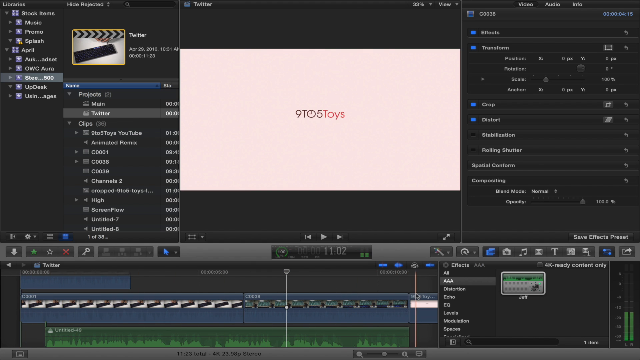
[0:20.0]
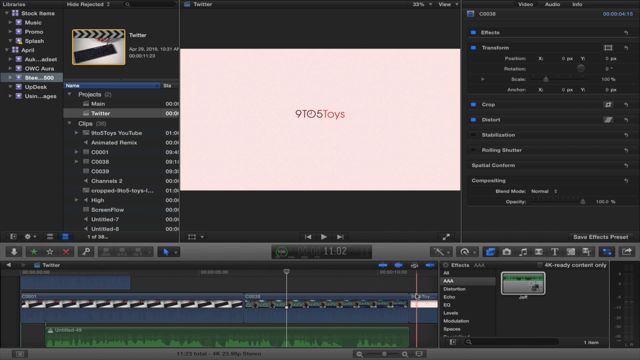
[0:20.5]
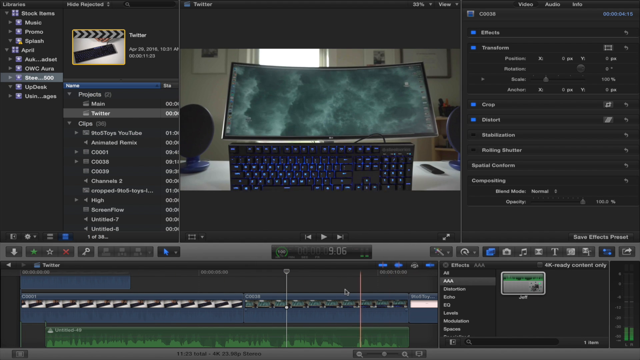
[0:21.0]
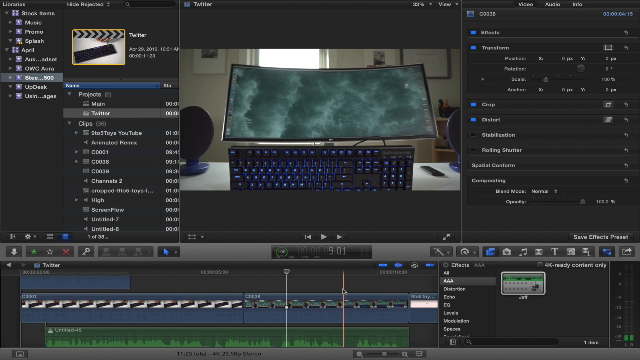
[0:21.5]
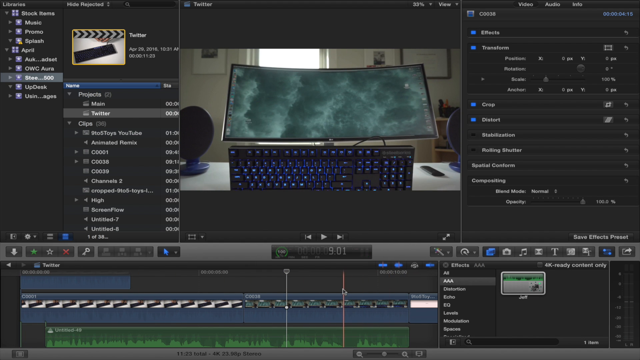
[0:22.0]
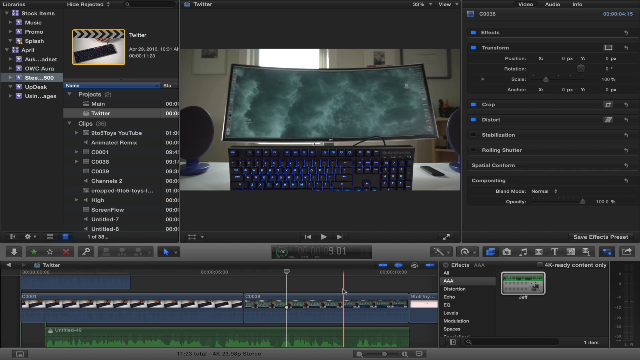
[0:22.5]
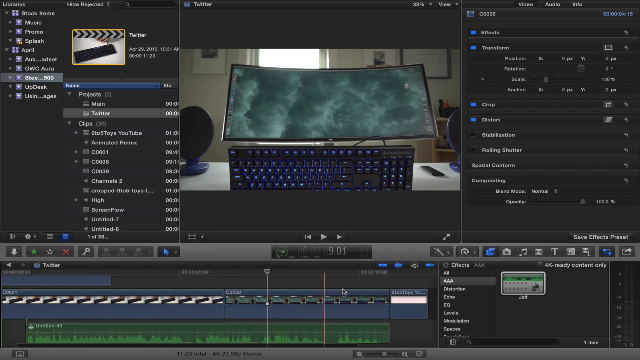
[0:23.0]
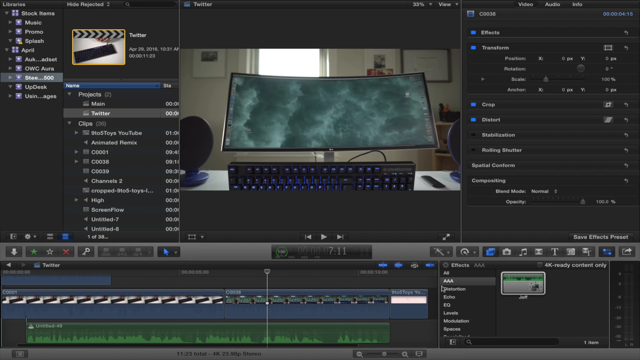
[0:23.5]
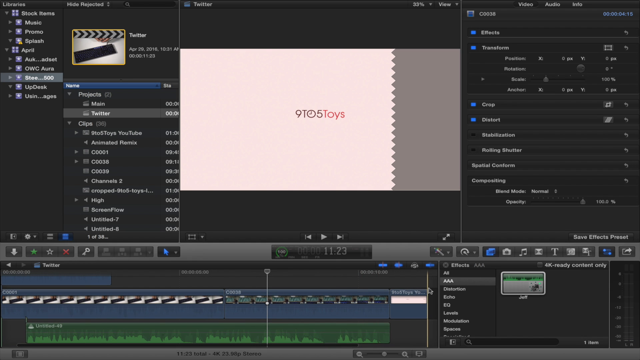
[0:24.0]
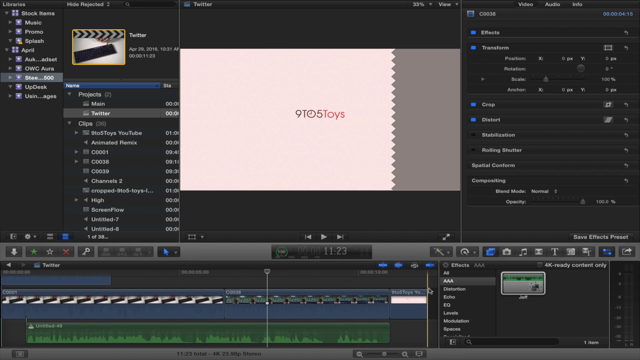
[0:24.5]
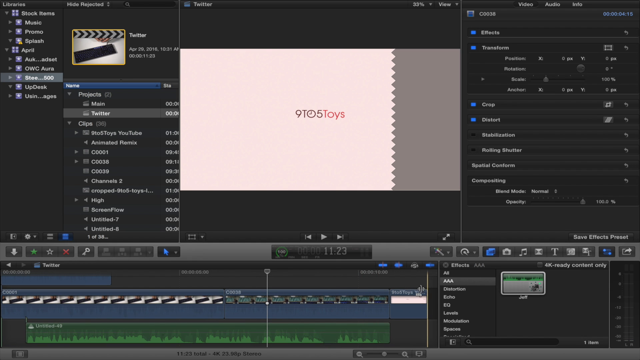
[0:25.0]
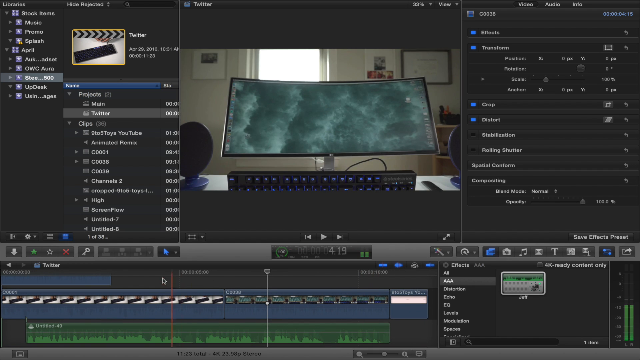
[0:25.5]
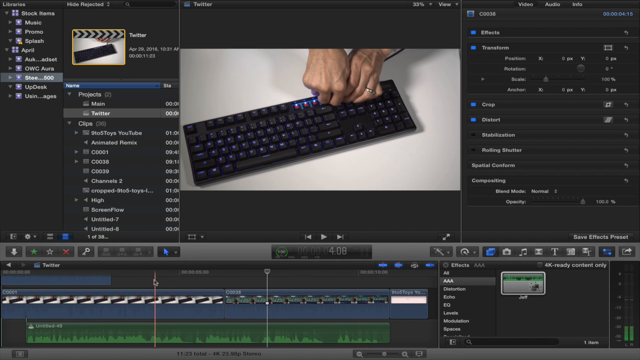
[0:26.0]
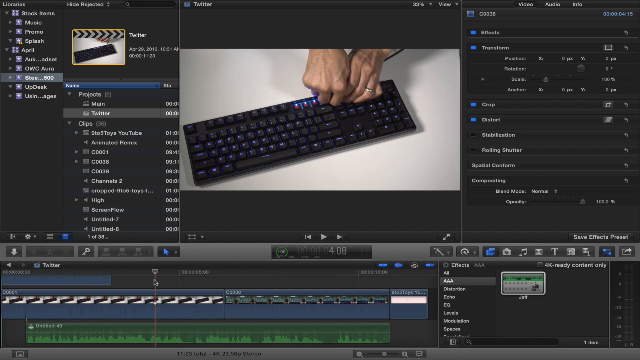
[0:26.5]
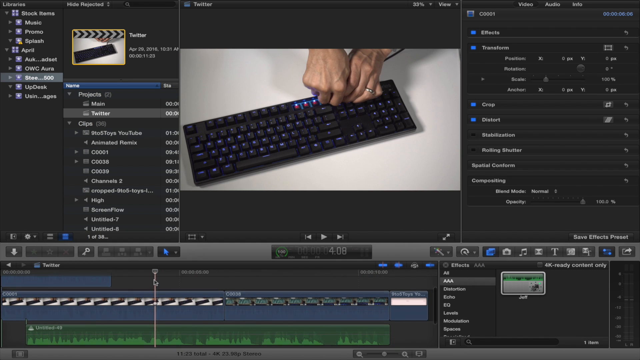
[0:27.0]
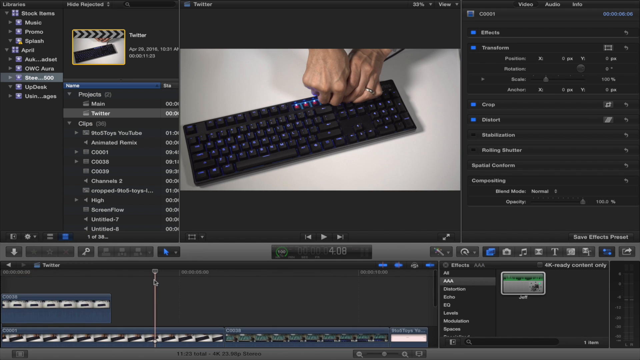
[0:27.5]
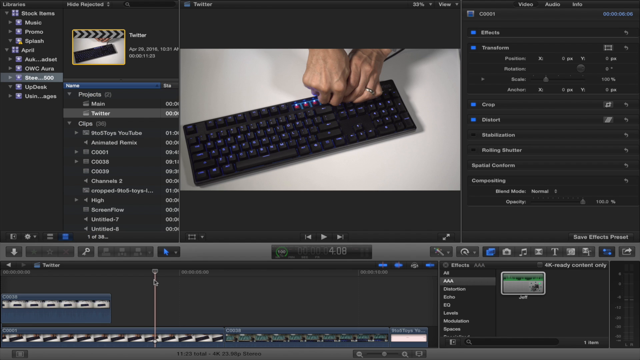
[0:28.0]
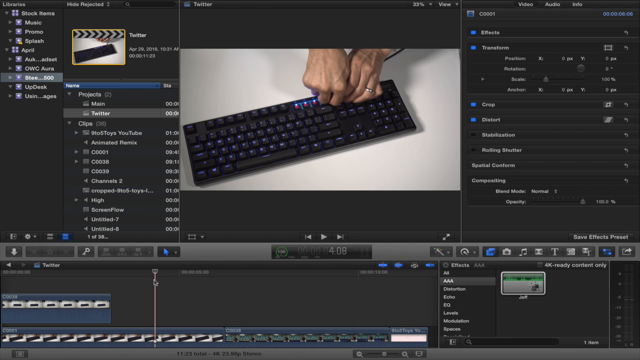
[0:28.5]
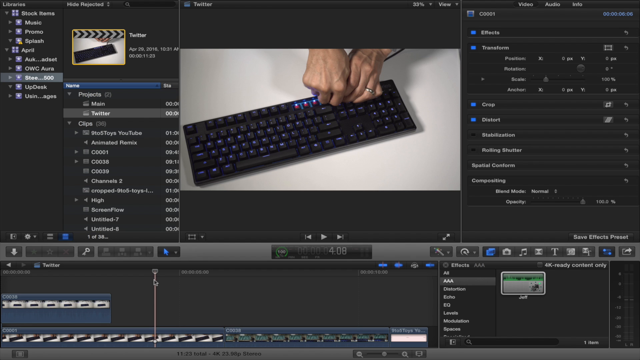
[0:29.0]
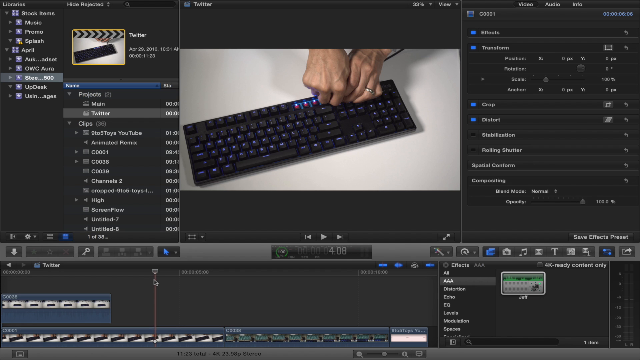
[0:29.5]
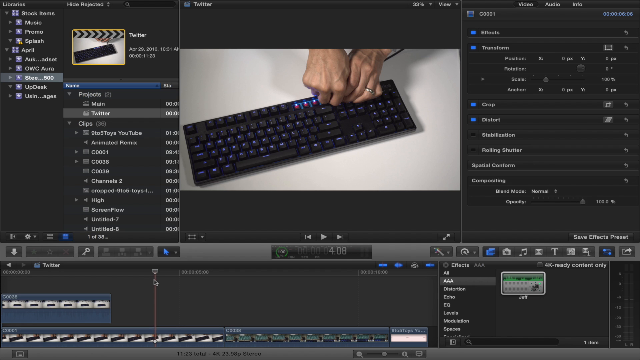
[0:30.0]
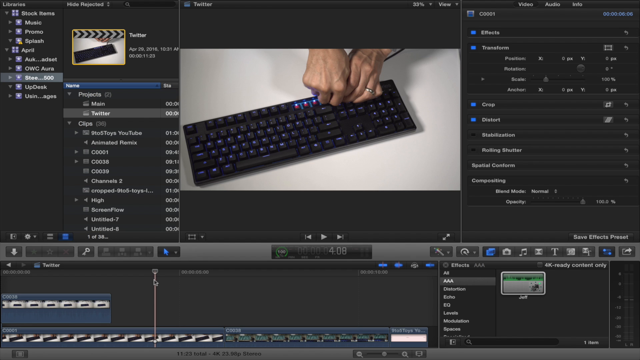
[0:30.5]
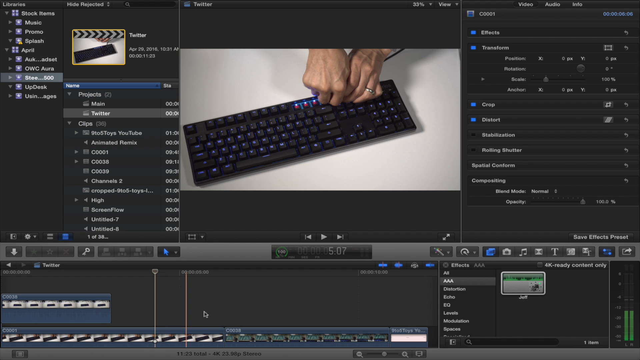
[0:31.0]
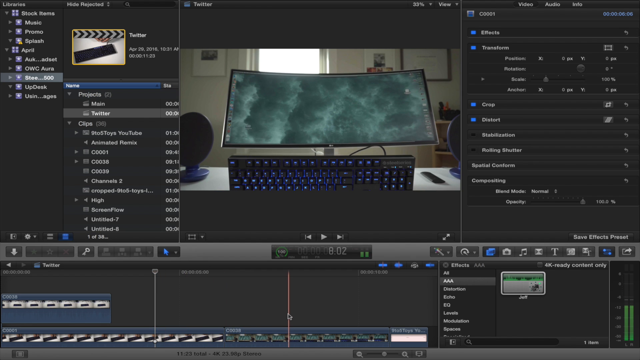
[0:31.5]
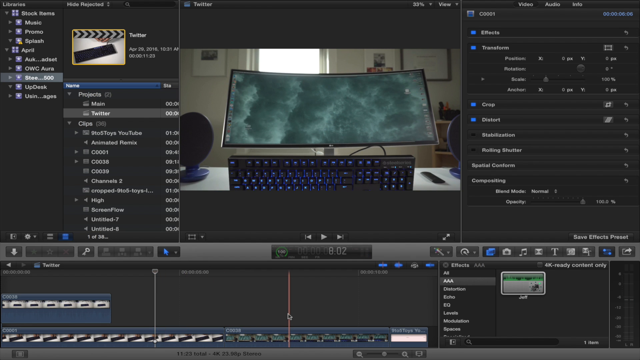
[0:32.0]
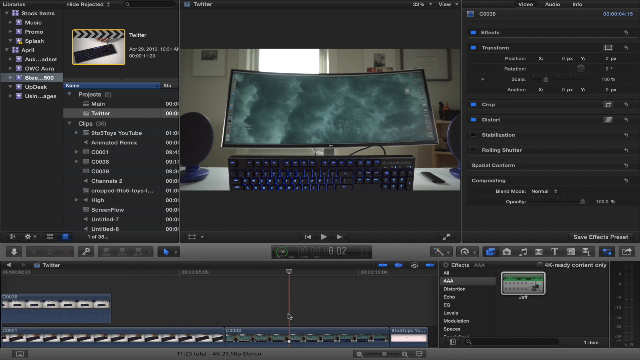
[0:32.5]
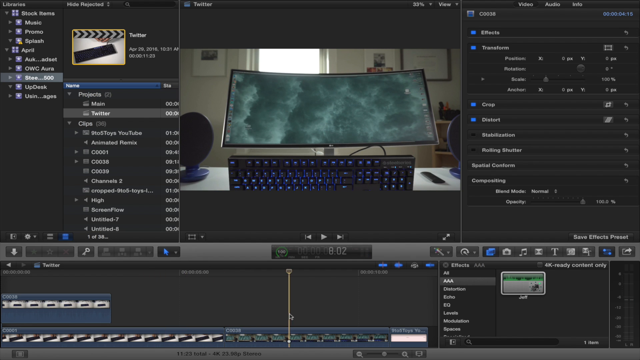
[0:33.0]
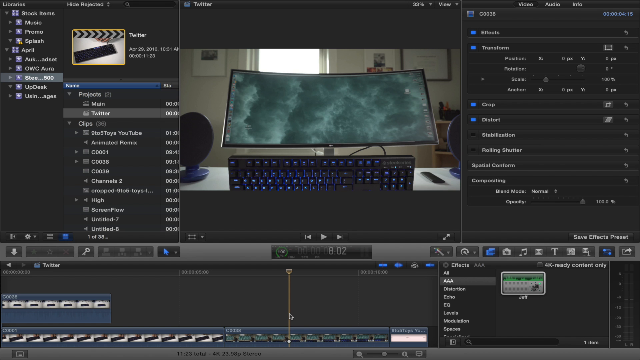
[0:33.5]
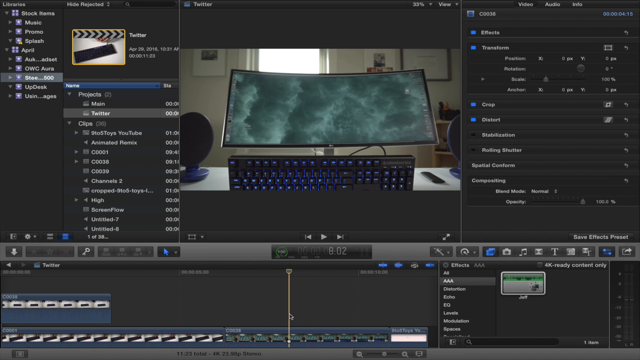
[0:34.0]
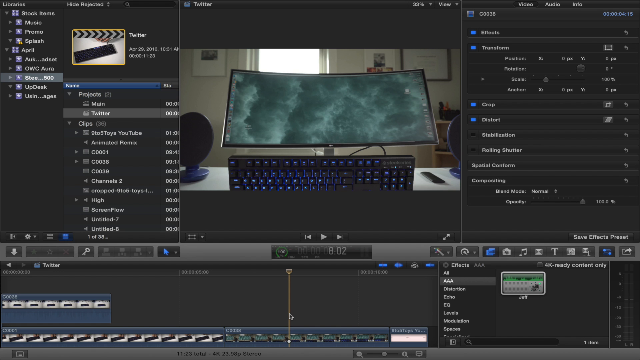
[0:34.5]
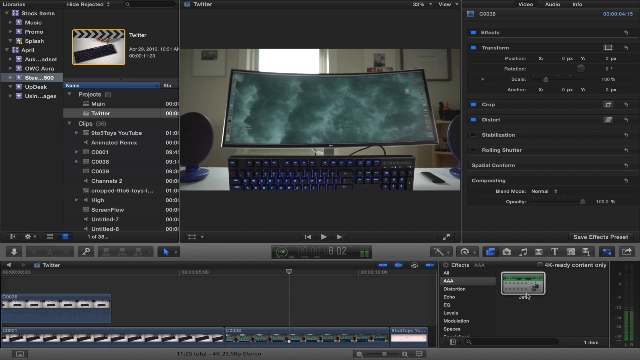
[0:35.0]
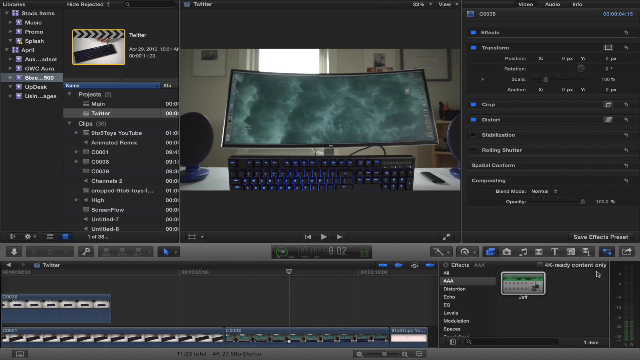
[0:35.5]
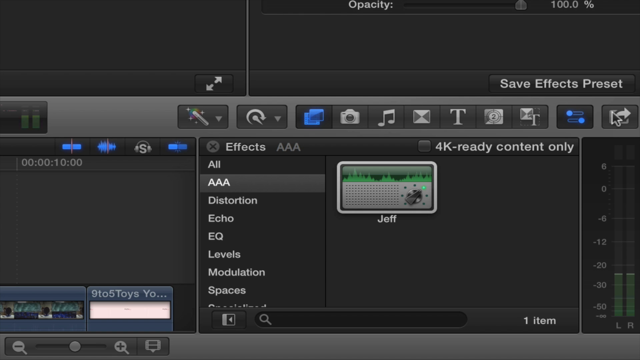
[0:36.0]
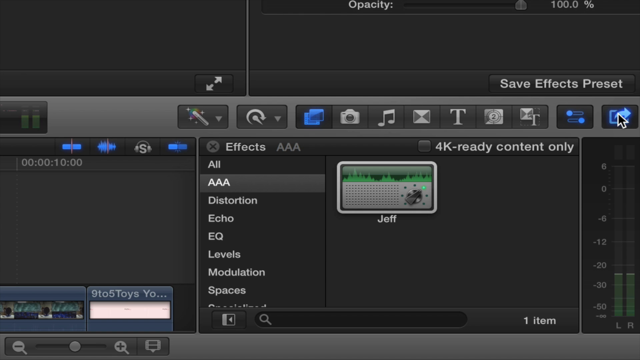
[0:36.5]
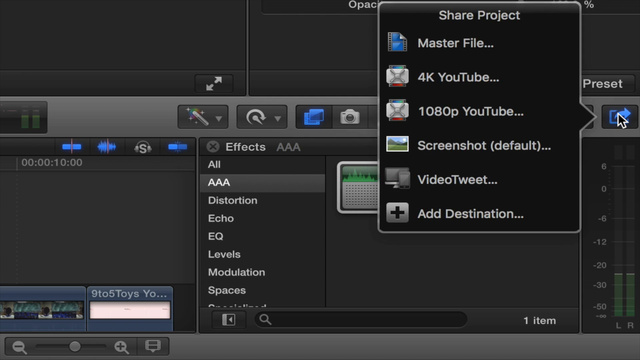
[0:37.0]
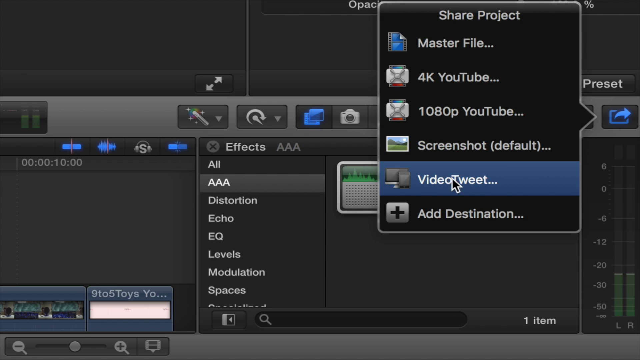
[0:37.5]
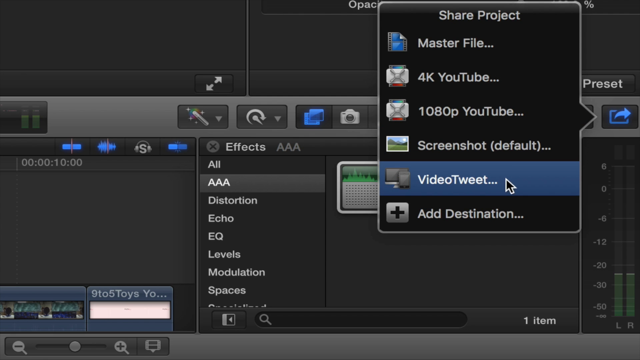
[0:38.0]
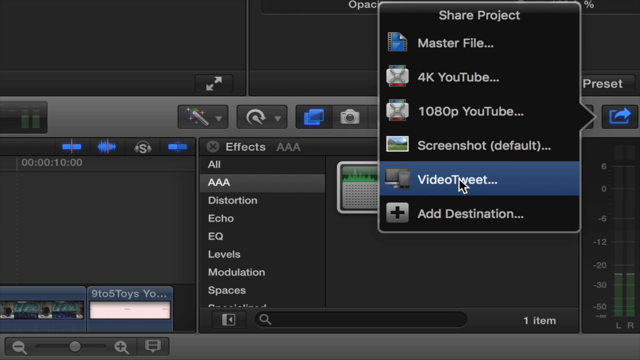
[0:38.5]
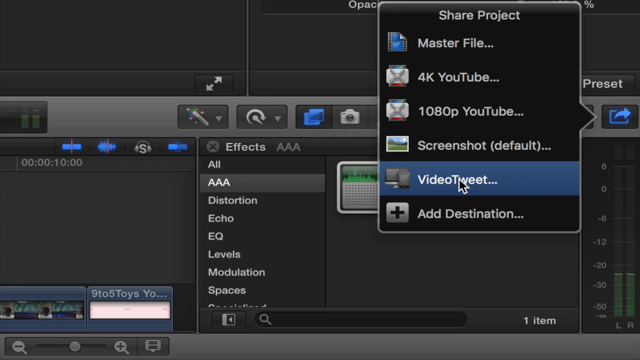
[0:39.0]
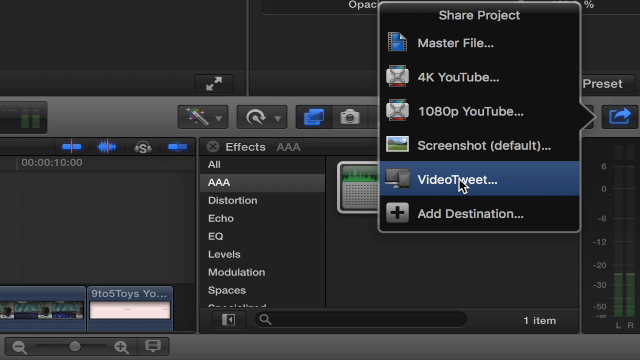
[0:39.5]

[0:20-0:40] The cursor on the bottom video timeline panel moves to a point at 9.01, and the video preview panel above shows a computer monitor with a keyboard in front of it against a window in an office space. The cursor moves further along to the left to 4.08, where the preview image shows a pair of hands coming down from the top of the screen onto a keyboard from above; they are a white person's hands, with a wedding ring on the left hand. The cursor moves up to 8.02, back to the shot of the monitor above the keyboard in front of a window in an office, before the view zooms in on a part of the control screen and the far right icon in the horizontal central list of options is selected once again. The Share Project window opens again, and the selection moves back down to VideoTweet, which is written in white with an image of a computer monitor and computer to its left.